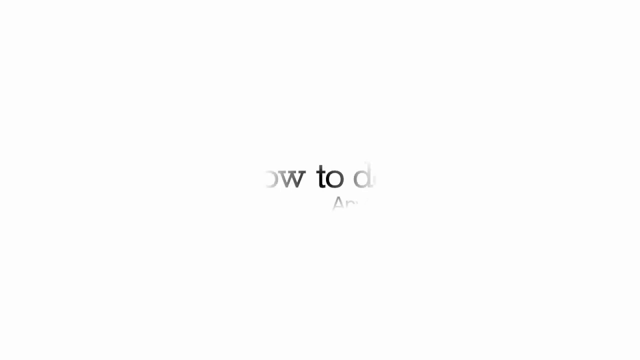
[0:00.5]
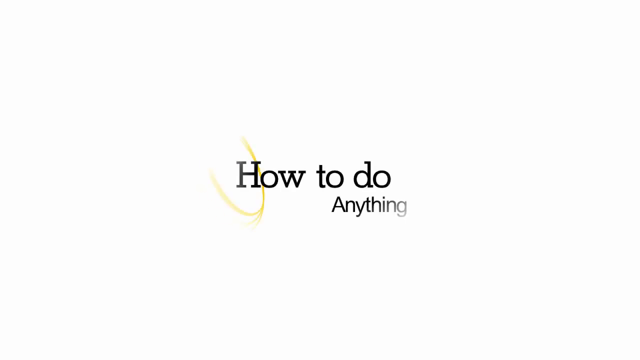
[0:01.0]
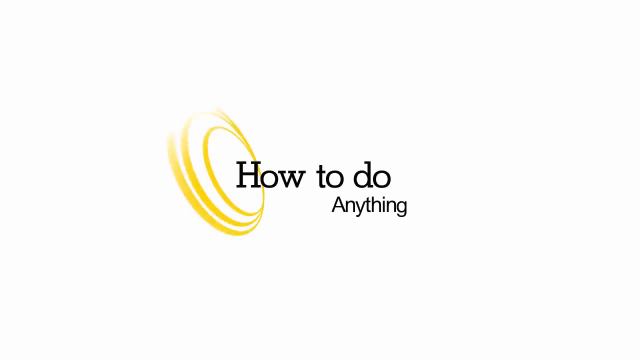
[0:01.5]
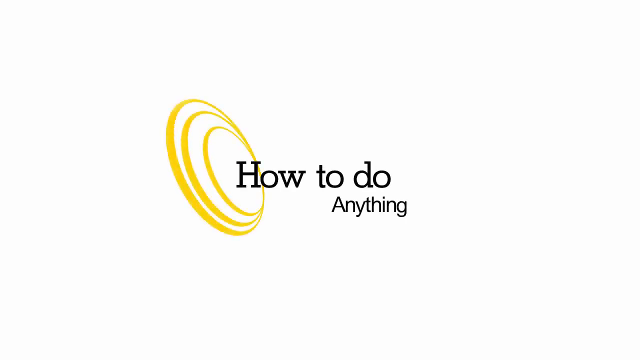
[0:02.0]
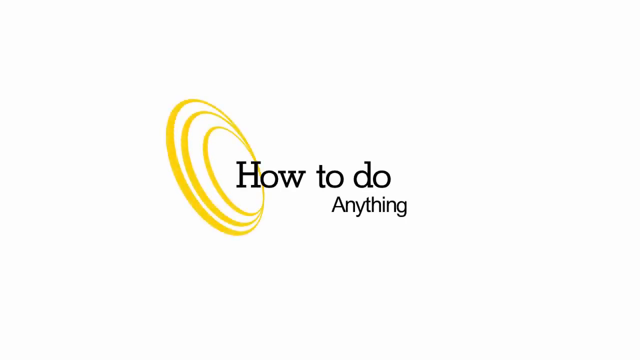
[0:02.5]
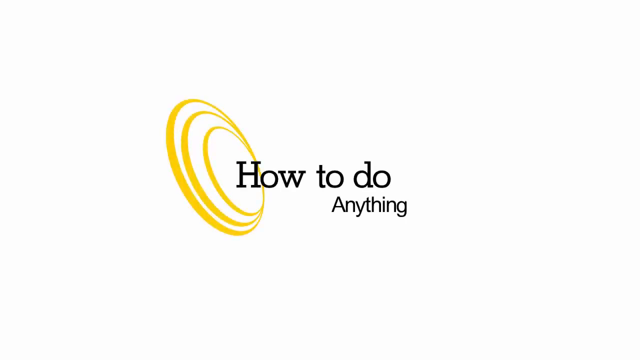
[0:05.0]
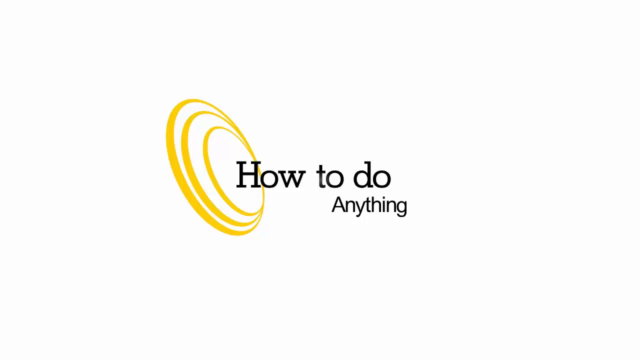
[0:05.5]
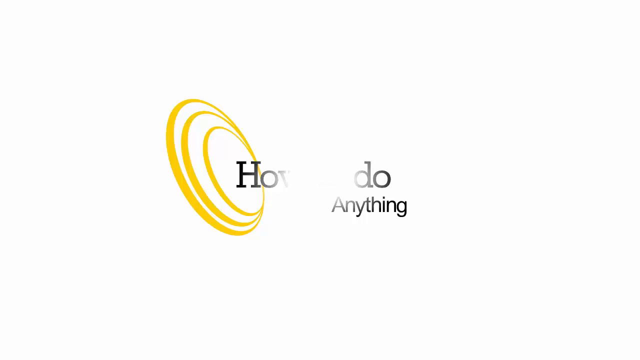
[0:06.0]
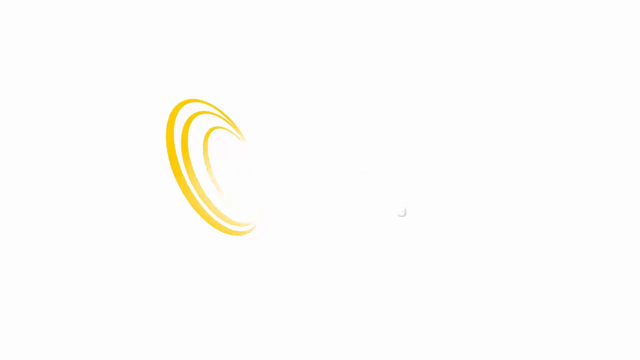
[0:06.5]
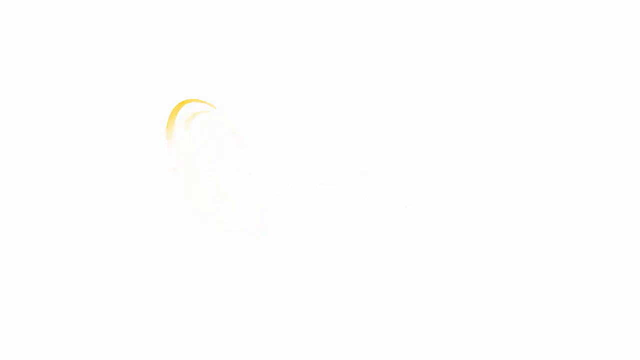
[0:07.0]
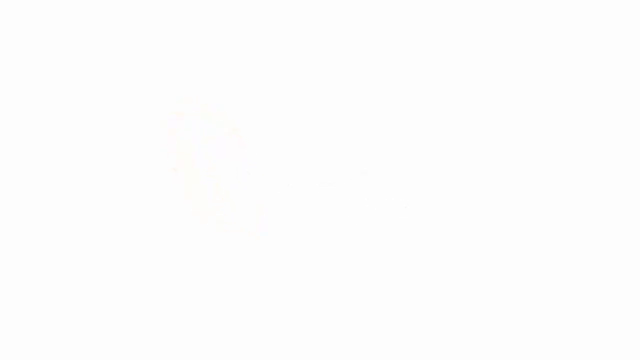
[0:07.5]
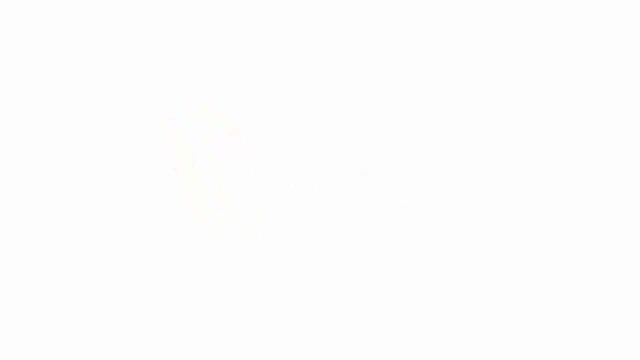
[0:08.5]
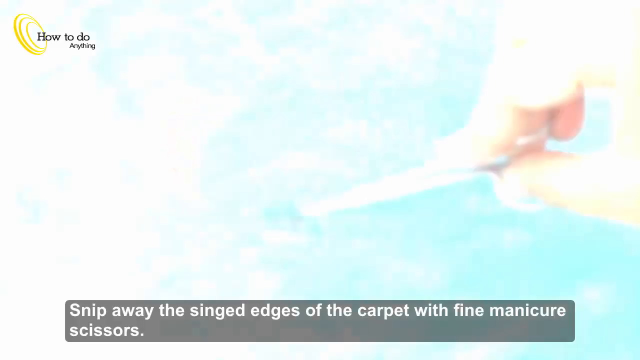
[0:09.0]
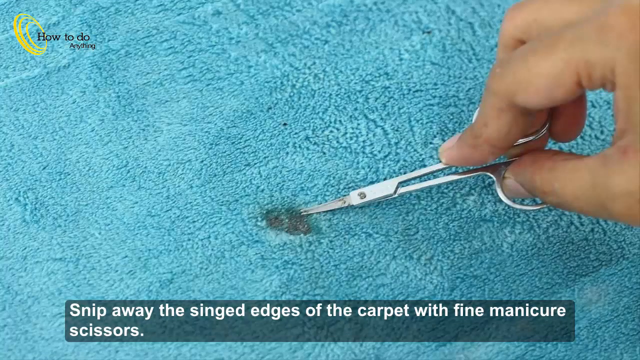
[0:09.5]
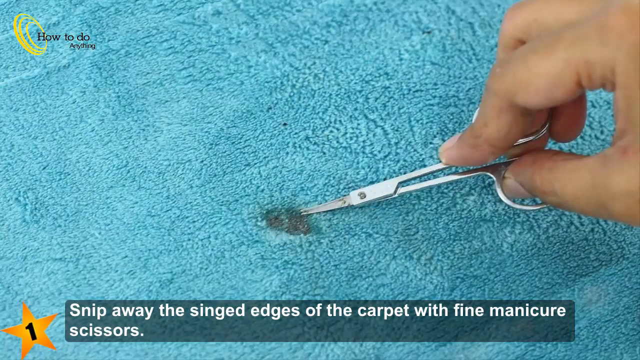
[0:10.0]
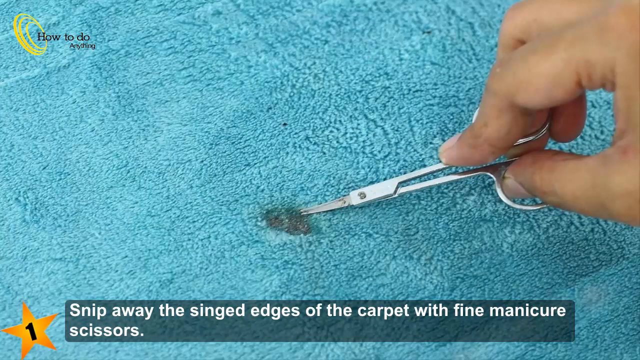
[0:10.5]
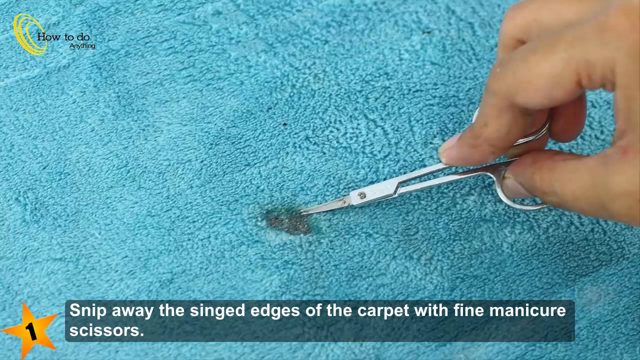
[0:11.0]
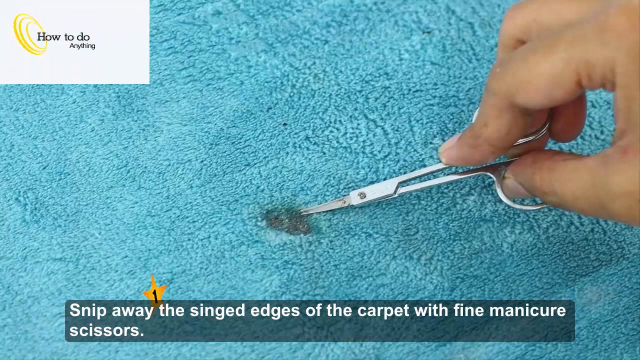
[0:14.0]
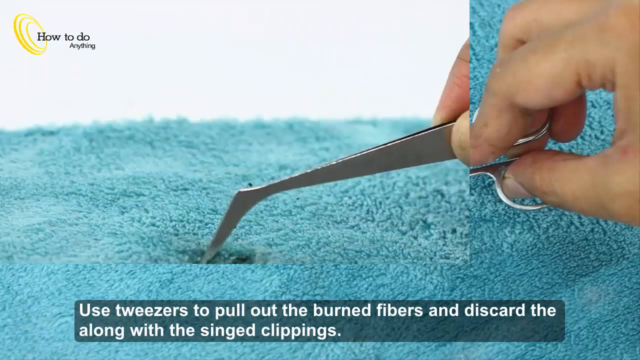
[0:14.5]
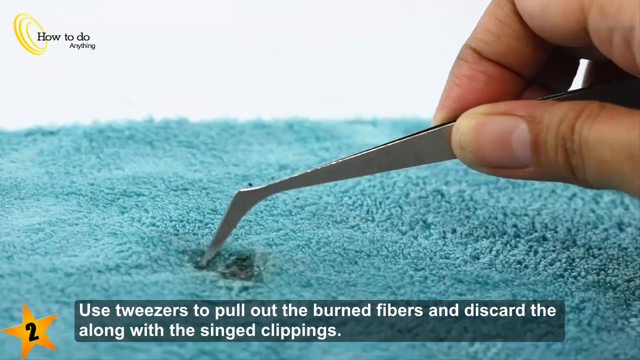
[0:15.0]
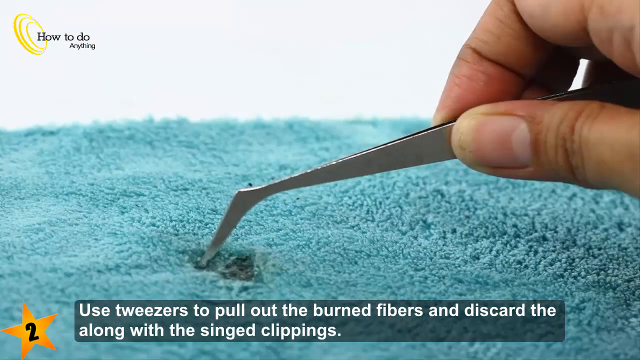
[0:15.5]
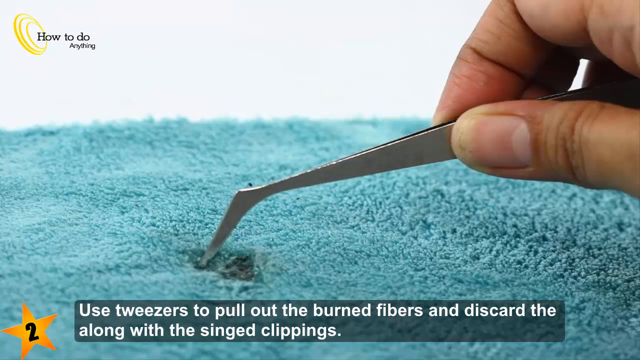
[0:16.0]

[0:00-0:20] Someone holds a pair of scissors over a stain on a blue carpet; the stain is black, and the scissors are held onto it. Underneath, the video indicates that tweezers are used to pull out the bent black fibers and discard them along with the clippings. The person first uses the scissors to rub on the black stain on the blue carpet, then takes the tweezers and starts rubbing on the black bent fibers of the carpet.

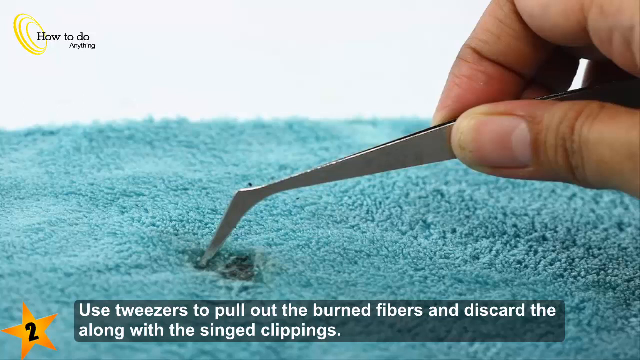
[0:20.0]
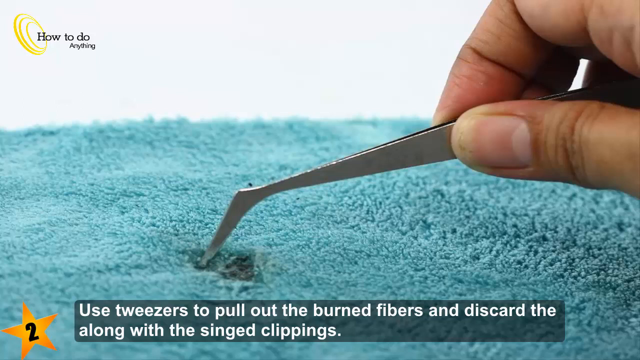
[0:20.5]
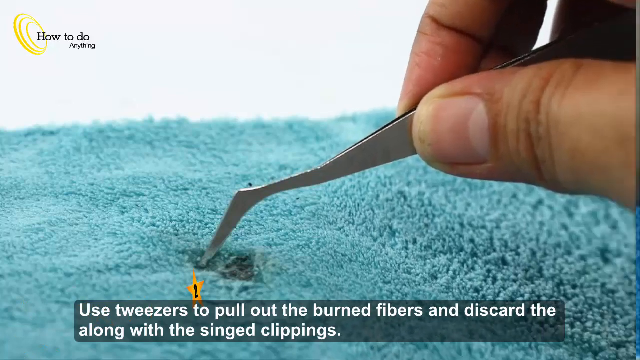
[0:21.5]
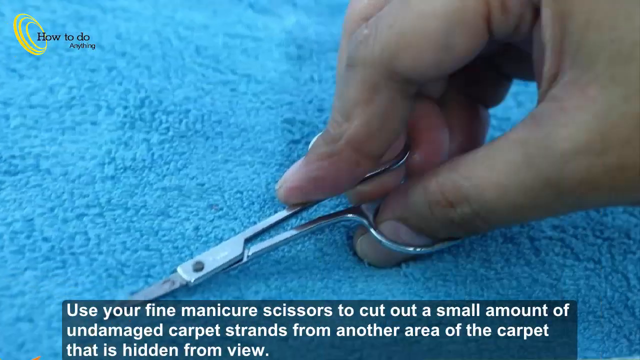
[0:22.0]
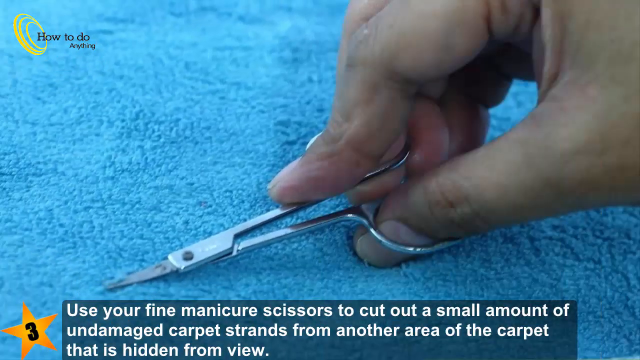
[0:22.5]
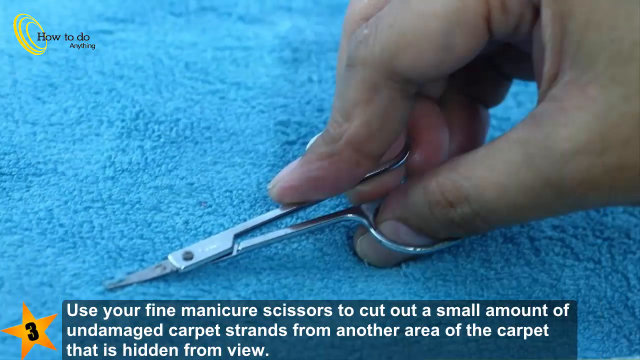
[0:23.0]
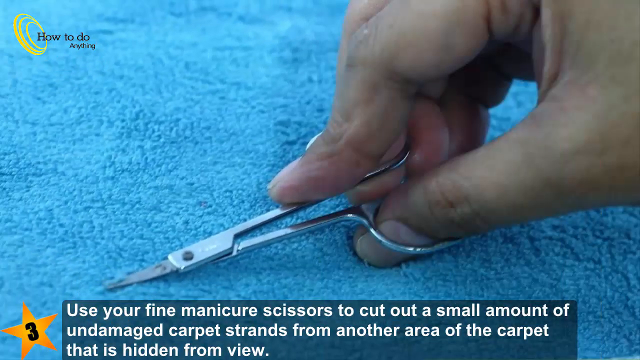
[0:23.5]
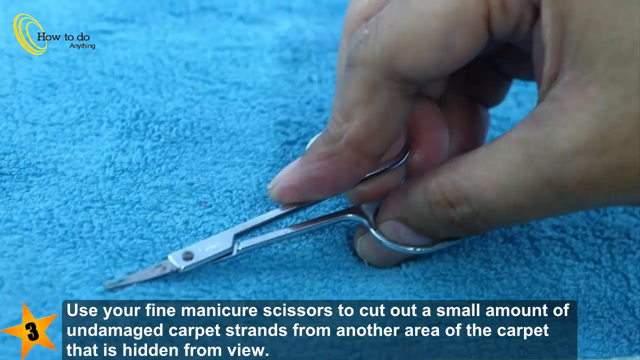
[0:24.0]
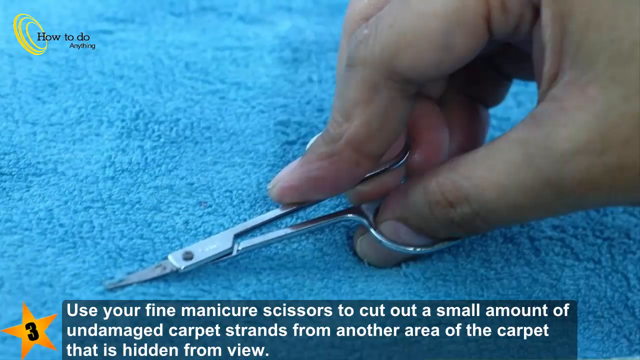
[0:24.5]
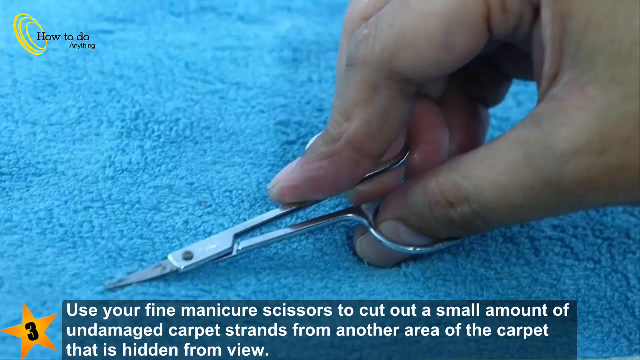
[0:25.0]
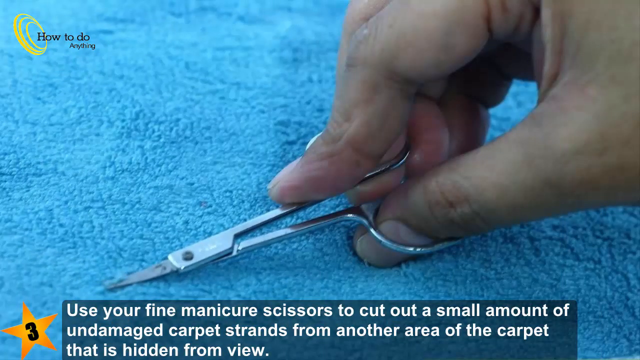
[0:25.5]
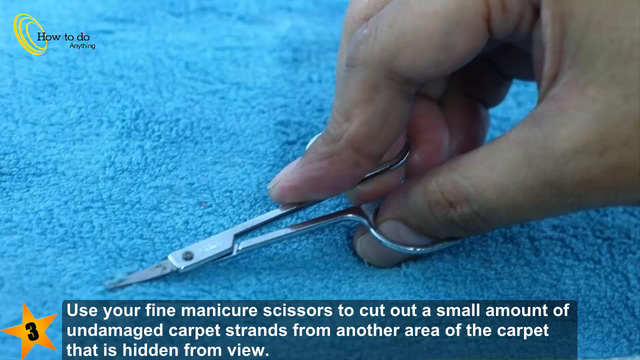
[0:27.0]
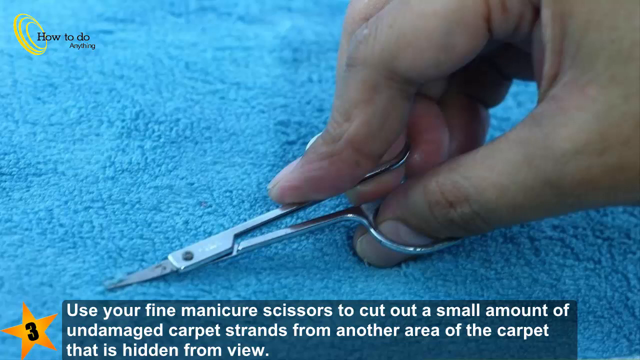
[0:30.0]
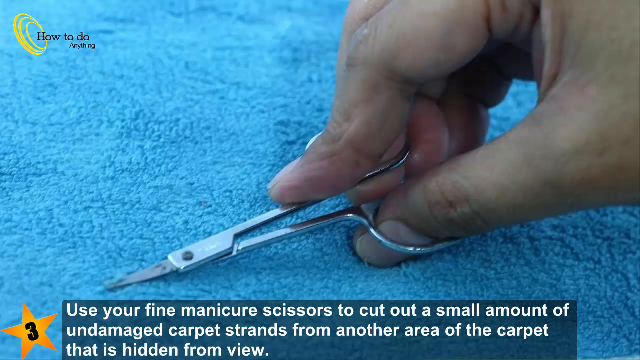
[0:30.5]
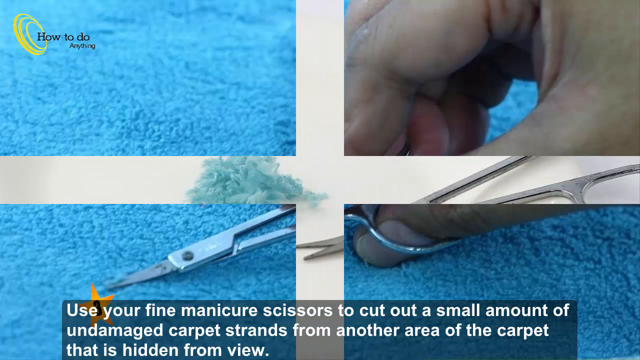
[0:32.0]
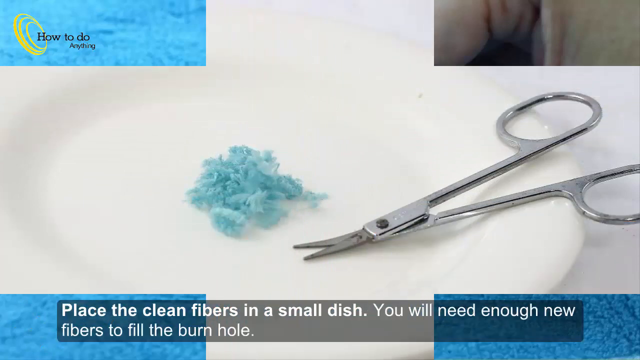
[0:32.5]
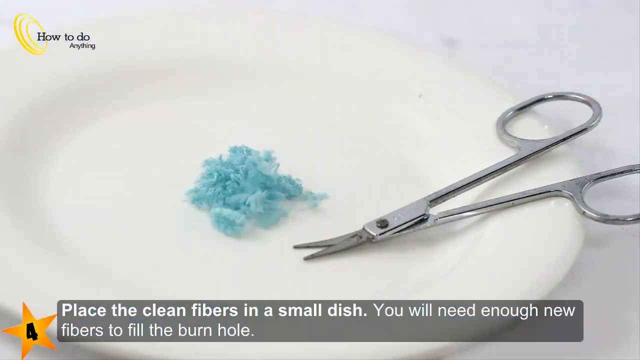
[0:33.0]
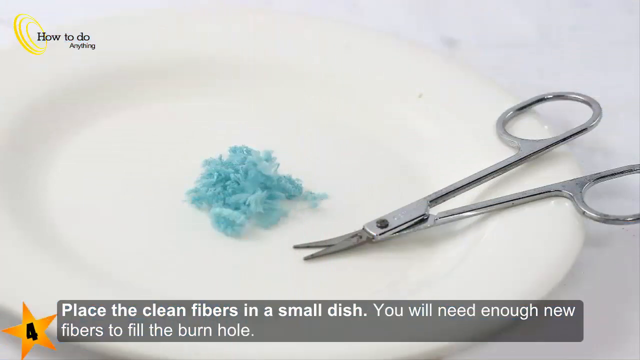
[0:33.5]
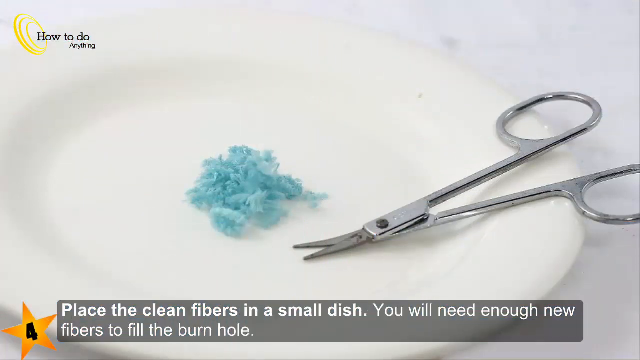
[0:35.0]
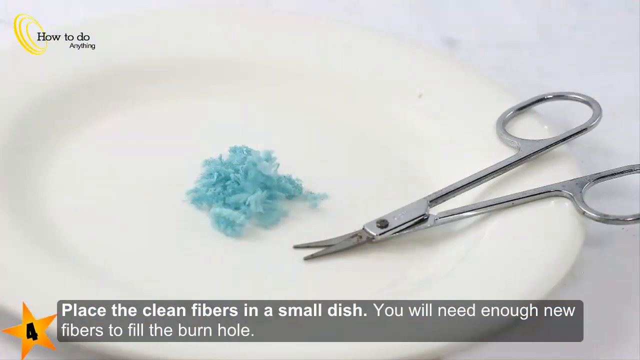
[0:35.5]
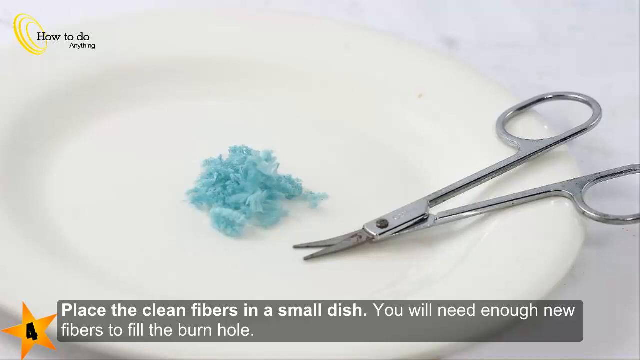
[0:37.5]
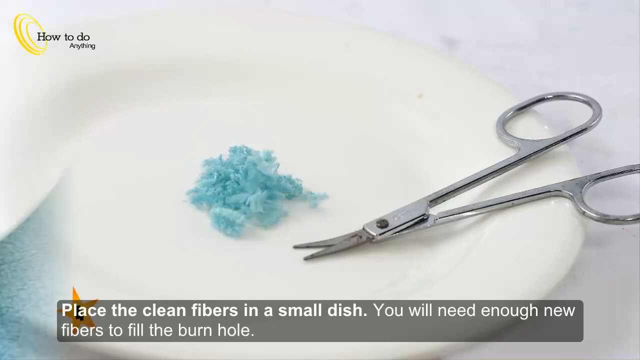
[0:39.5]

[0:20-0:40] The person rubs with the scissors, leaving a clear part where the scissors were rubbed. Taking the scissors again, the person cuts off the smaller bits left behind, and the black stain is all gone. Next, clean fibers are shown in a small white dish; text indicates that enough clean fibers are needed and are put in the dish. The small cut fibers are in the dish, with a pair of scissors next to it. The video then shows again how it was all done: the scissors are used to cut a small amount, the tweezers finish the job, and the fine cut fibers are put in a small dish.